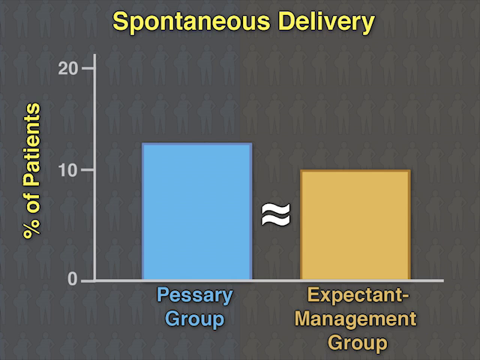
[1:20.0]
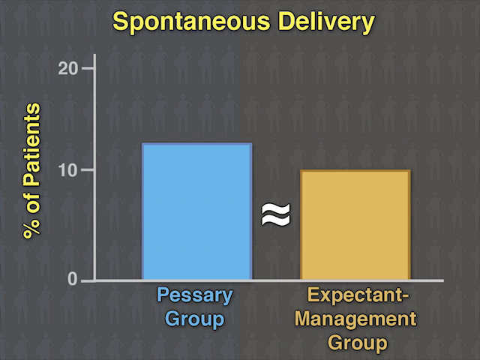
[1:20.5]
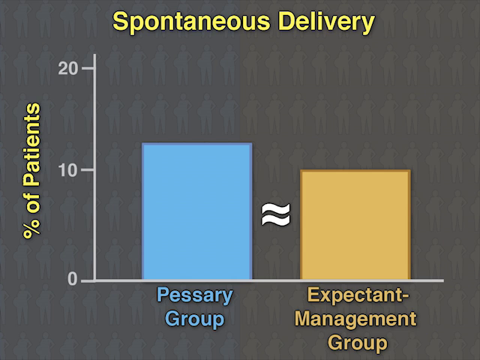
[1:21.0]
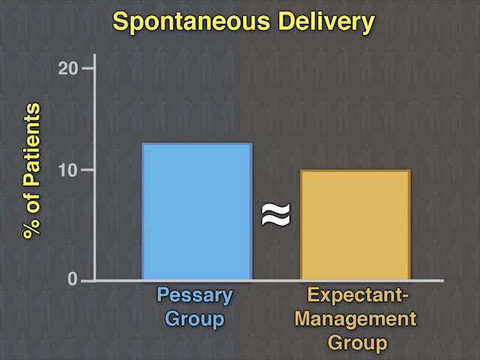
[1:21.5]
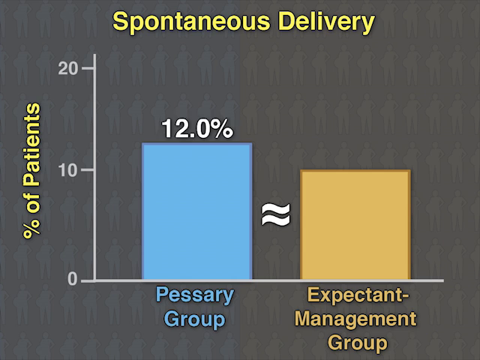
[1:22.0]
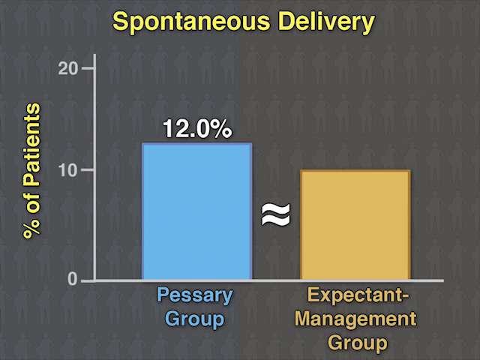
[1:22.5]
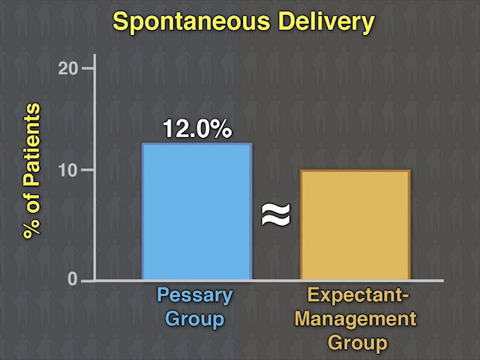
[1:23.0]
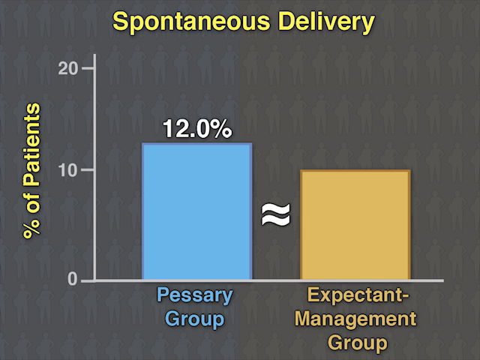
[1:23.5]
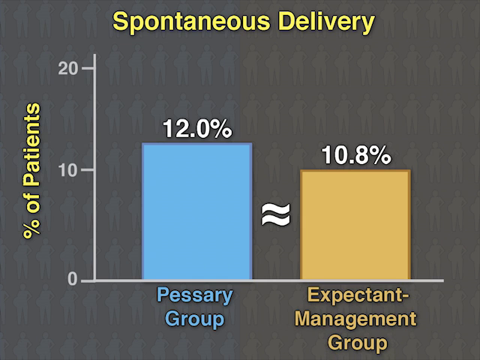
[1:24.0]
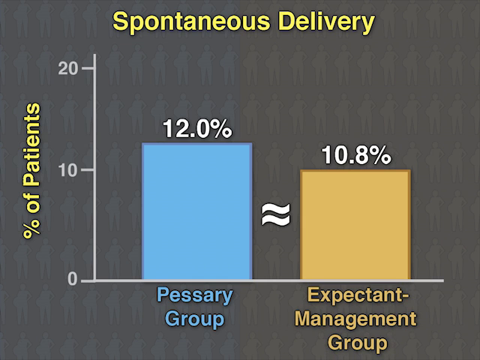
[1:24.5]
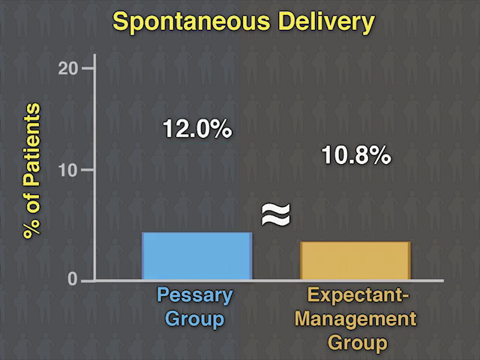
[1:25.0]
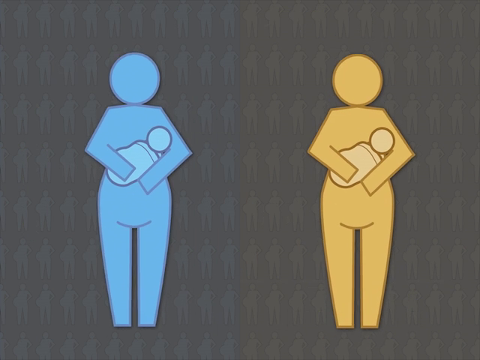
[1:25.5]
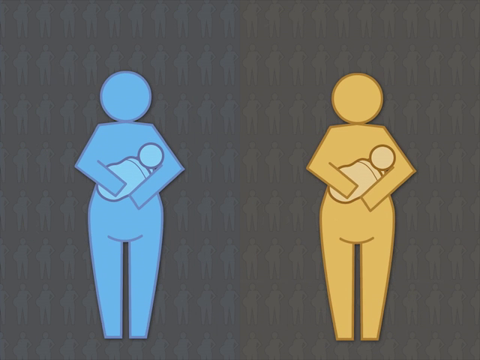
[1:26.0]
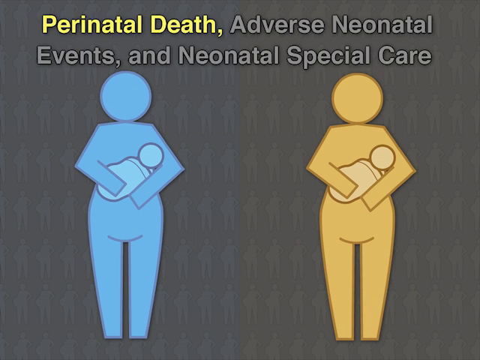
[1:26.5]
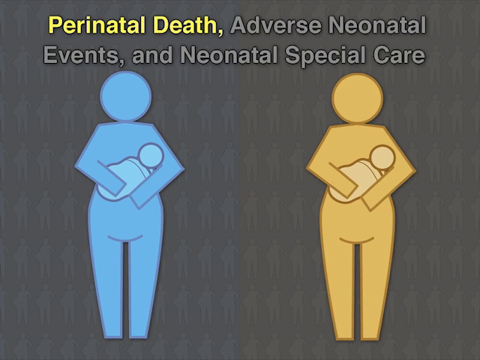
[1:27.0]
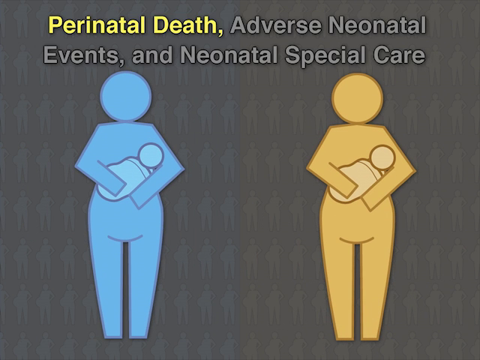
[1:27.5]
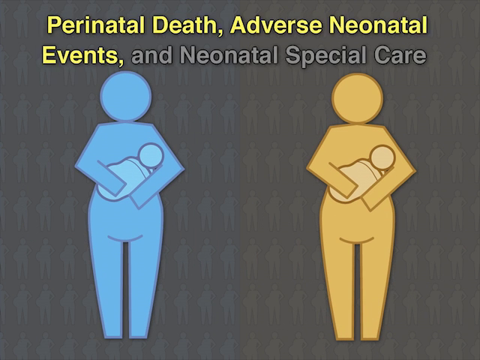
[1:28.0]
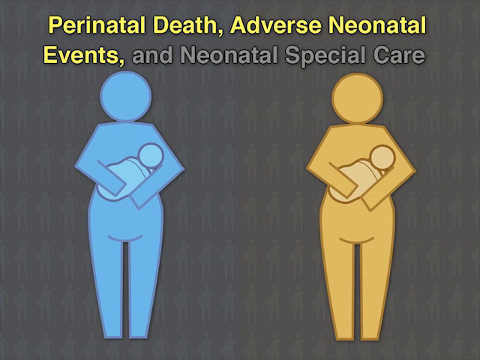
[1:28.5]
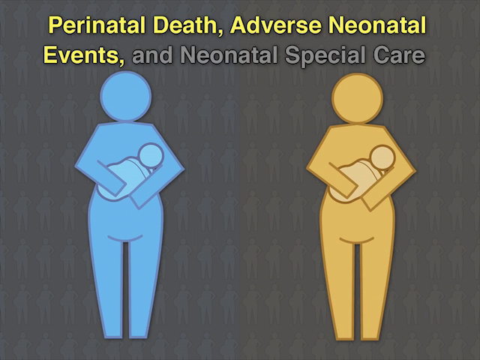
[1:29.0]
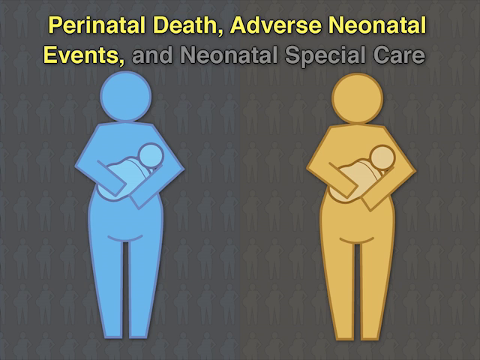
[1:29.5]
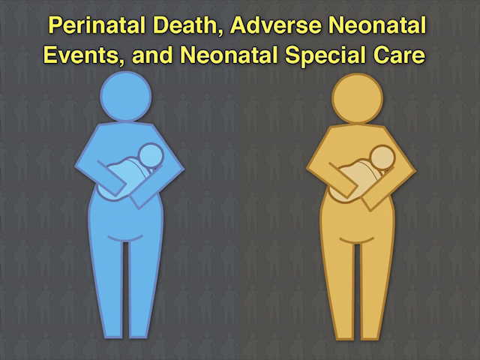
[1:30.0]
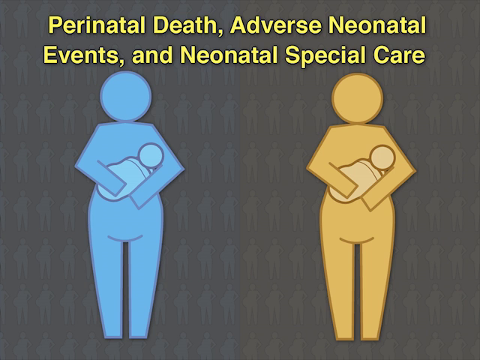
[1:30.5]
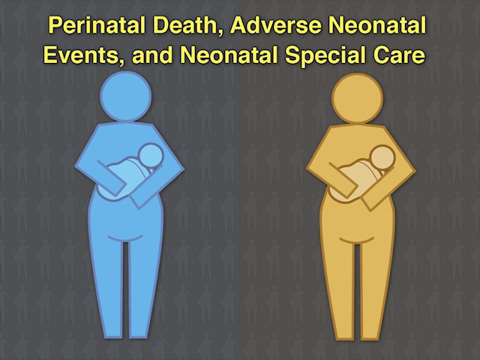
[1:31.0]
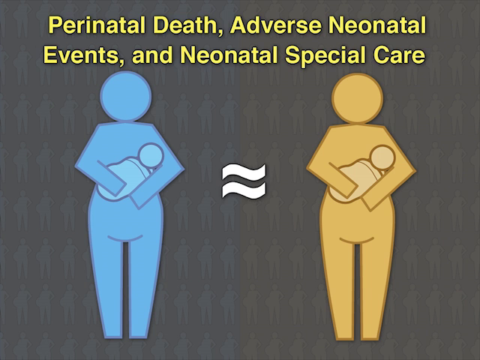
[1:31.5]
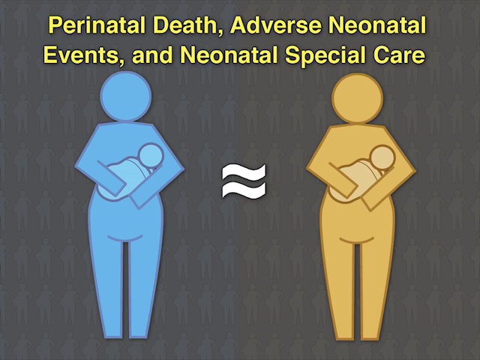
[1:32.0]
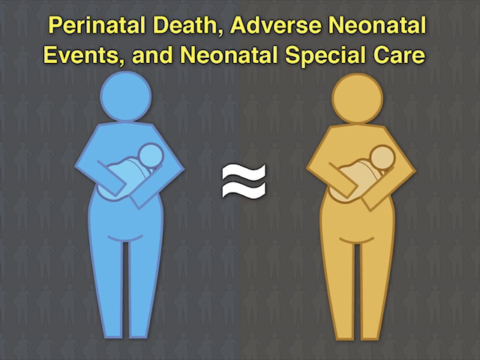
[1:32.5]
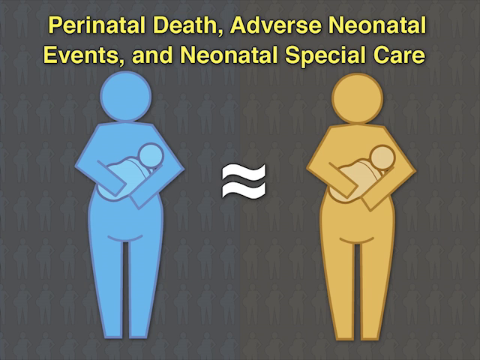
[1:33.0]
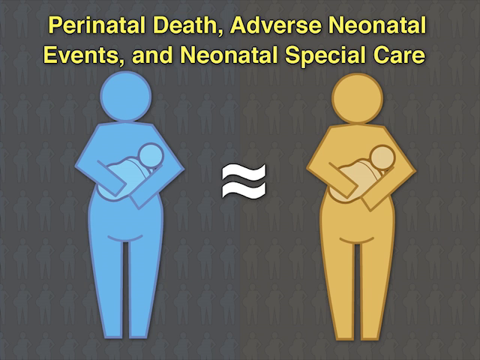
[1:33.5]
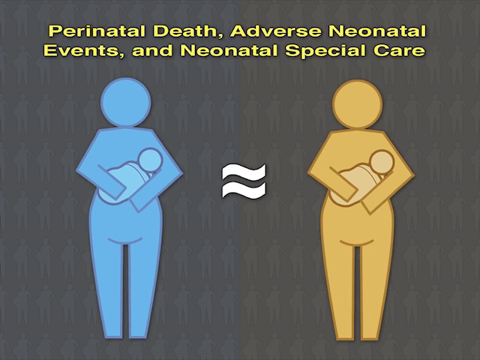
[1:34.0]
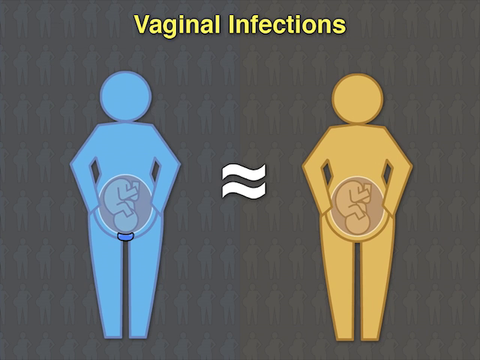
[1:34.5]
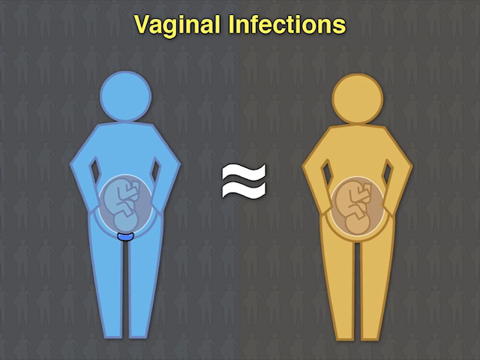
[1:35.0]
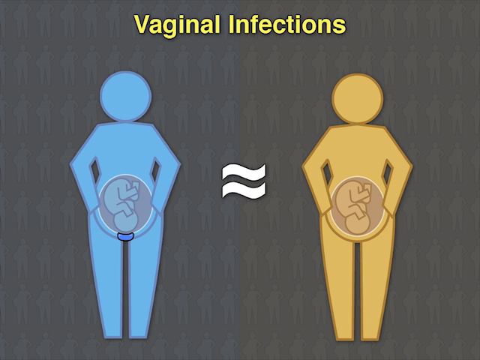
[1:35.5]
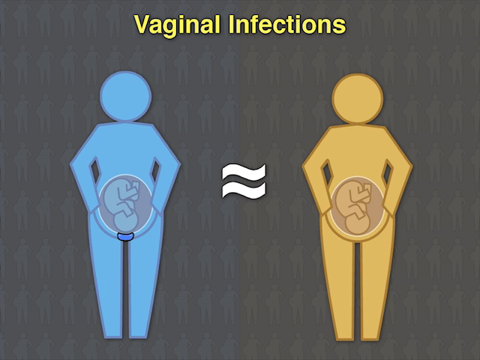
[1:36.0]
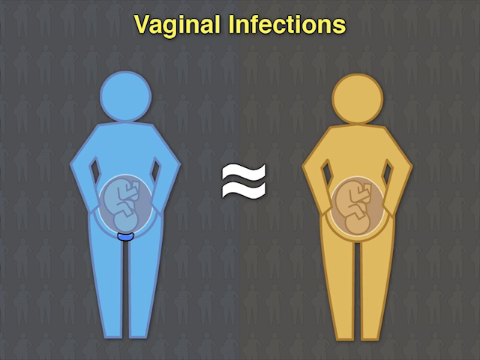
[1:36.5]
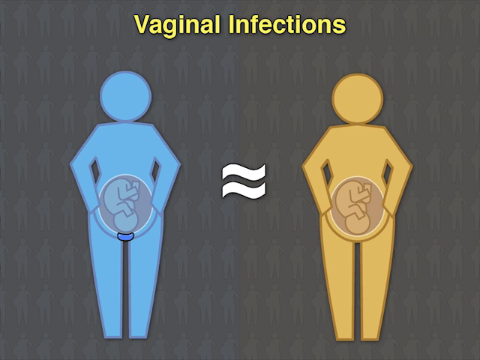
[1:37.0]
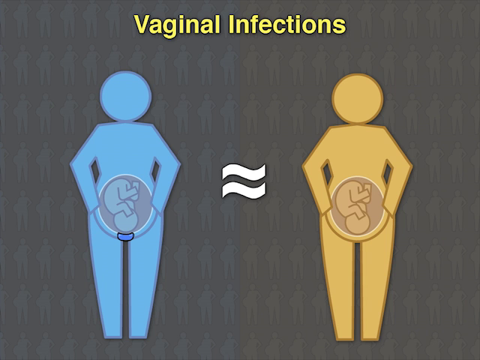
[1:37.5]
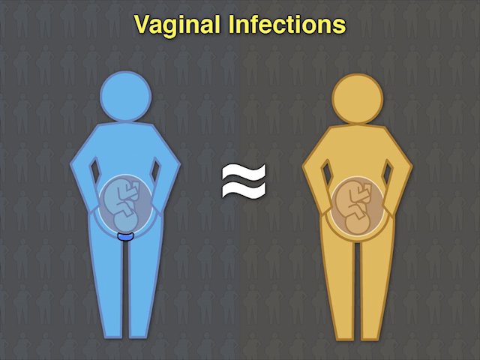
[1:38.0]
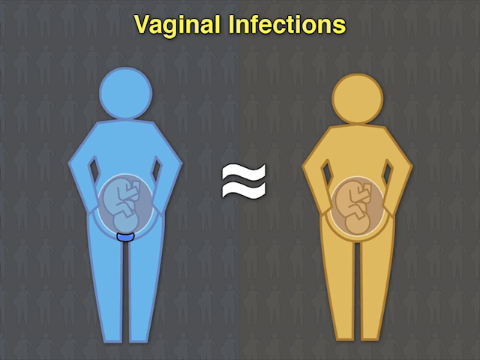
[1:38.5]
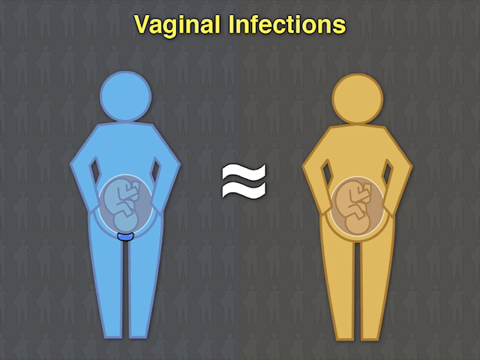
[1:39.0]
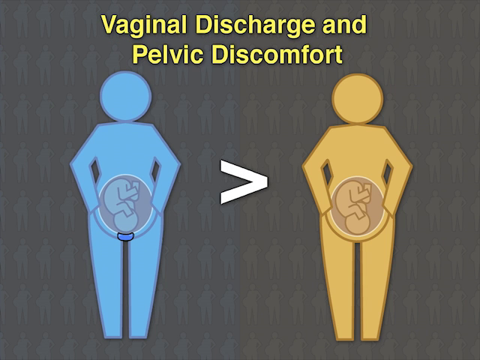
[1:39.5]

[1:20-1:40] A bar graph has the title "spontaneous delivery" at the top, "number of patients" on the left side, and the pessary group and the expectant group at the bottom, with a somewhat wavy equal sign between them. The number of patients axis goes from zero to 20. The first group is just about 10 and the second is just about equal to 10; the graph indicates 12% for the first group and 10.8% for the second. Two women cutouts are on the screen again, one in blue and one in yellow, both holding a baby in their arms. Text at the top reads "perinatal death, adverse neonatal events, and neonatal special care". The text at the top then switches to "Vaginal Infections", and then to "vaginal discharge and pelvic discomfort". The equal sign between the two women changes to a greater than sign.